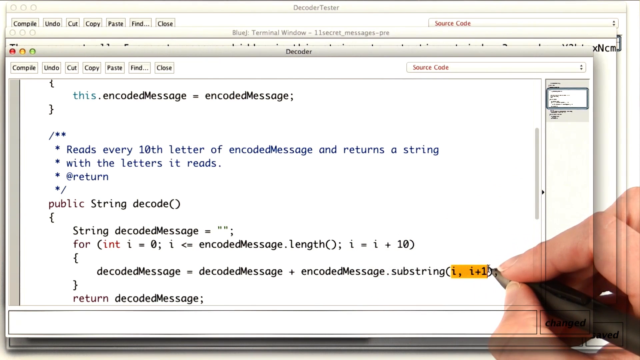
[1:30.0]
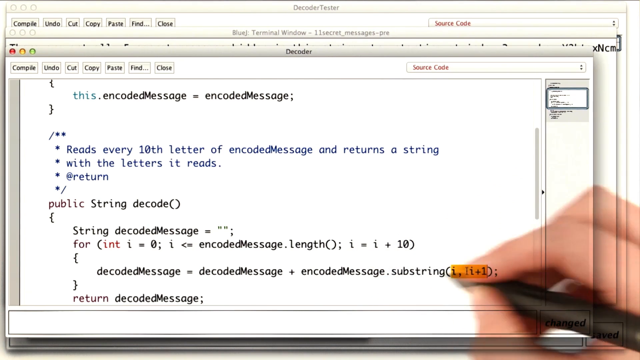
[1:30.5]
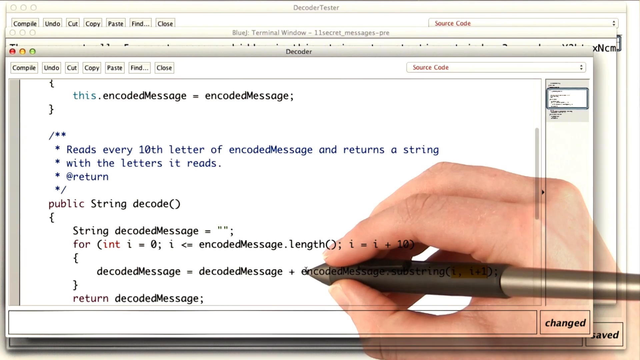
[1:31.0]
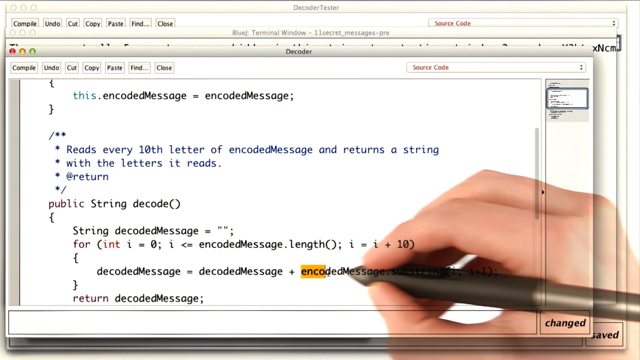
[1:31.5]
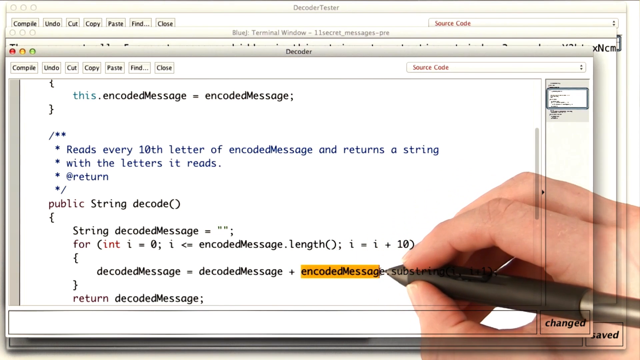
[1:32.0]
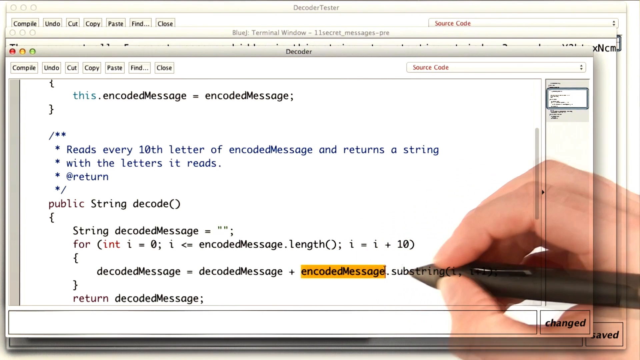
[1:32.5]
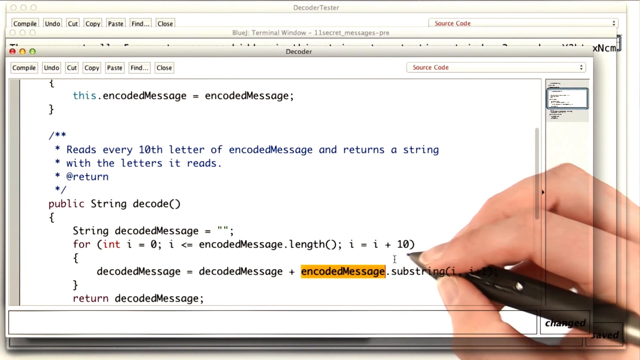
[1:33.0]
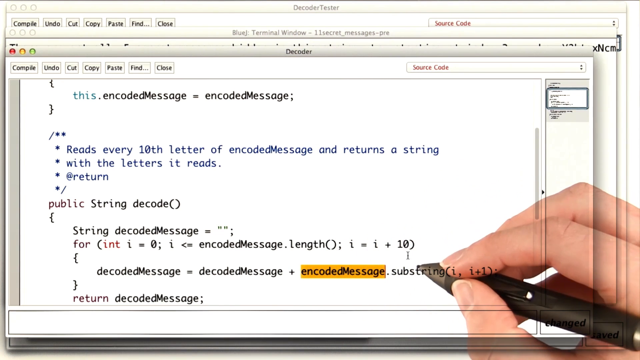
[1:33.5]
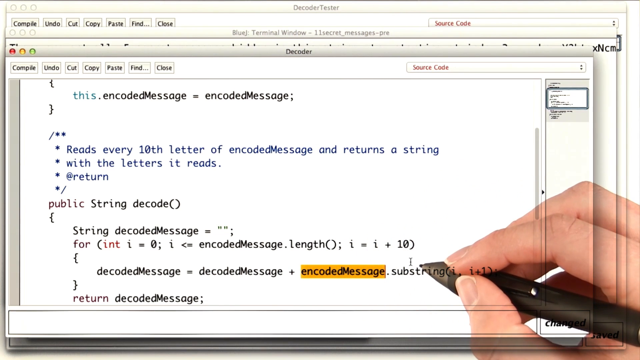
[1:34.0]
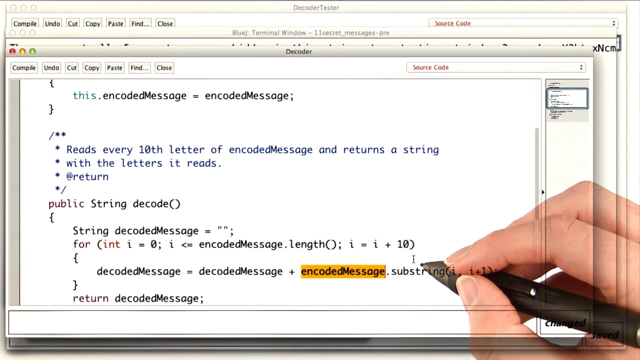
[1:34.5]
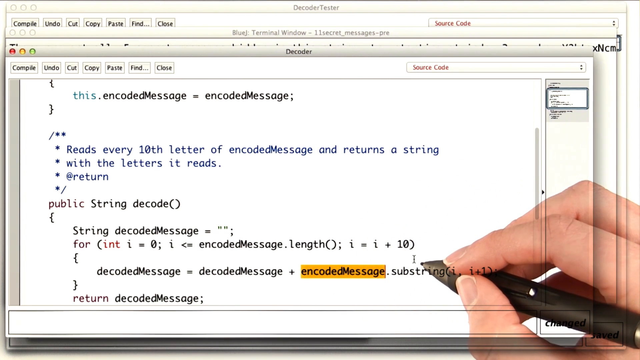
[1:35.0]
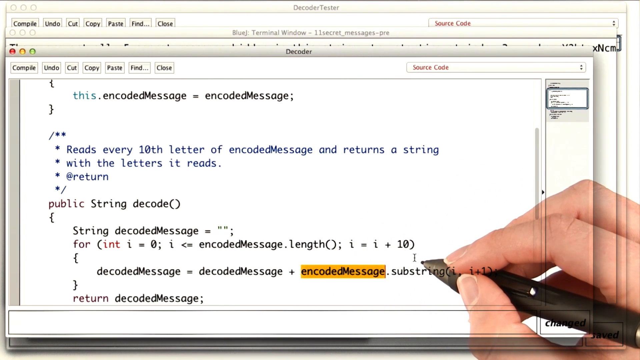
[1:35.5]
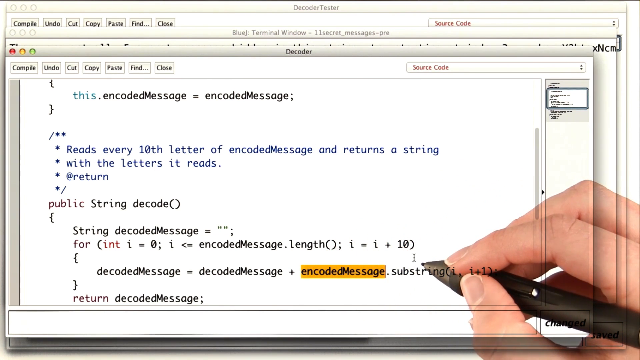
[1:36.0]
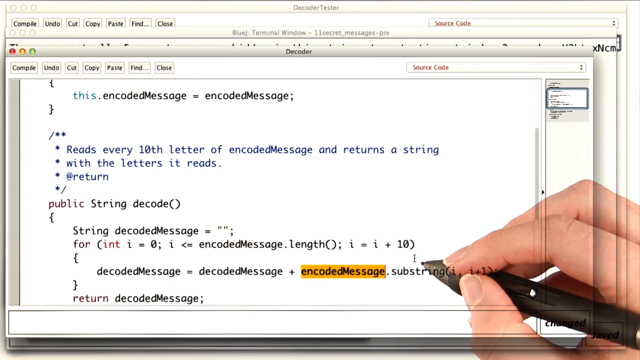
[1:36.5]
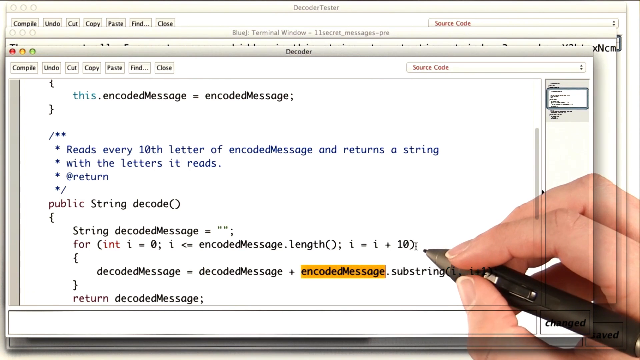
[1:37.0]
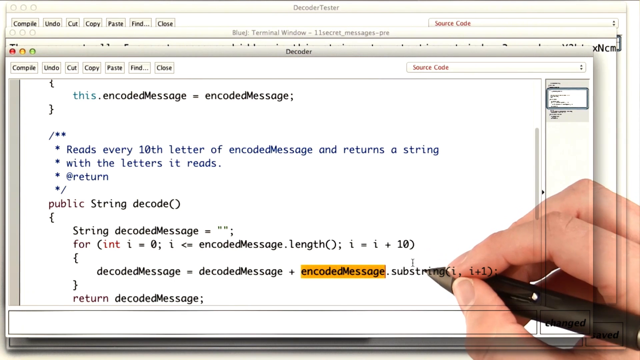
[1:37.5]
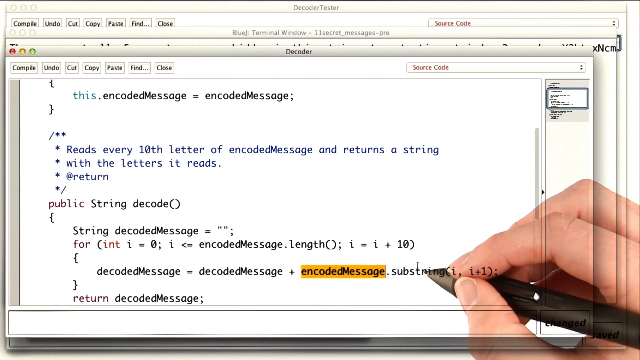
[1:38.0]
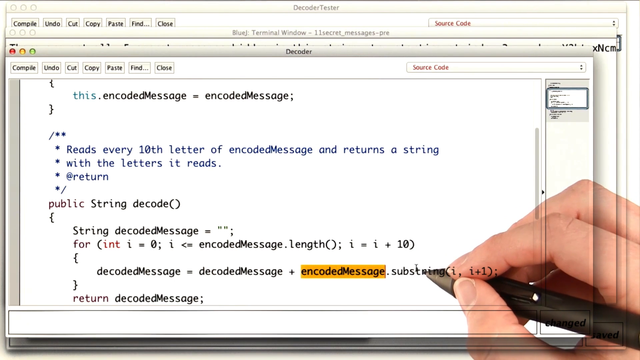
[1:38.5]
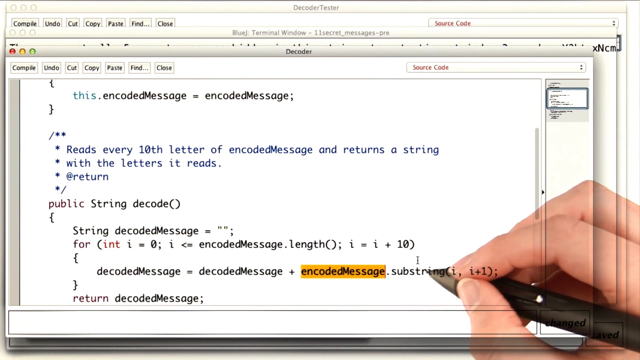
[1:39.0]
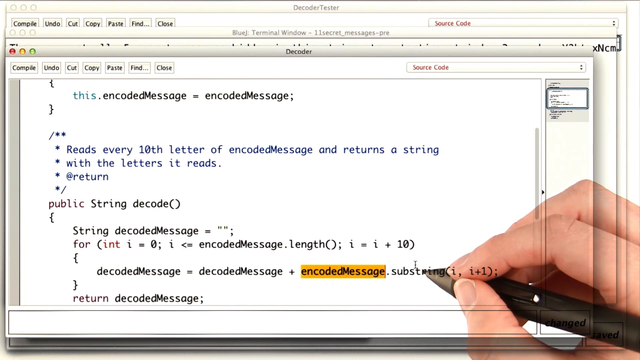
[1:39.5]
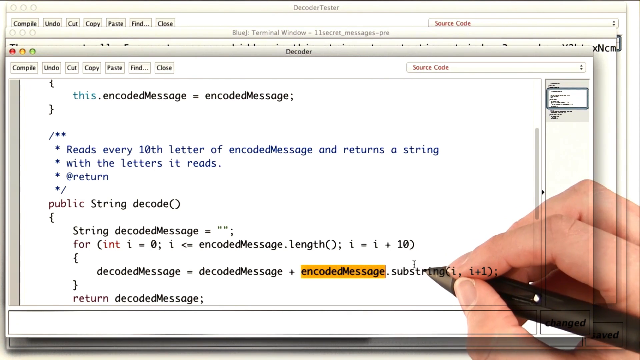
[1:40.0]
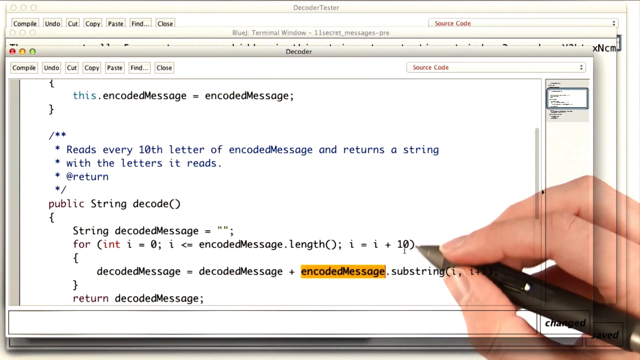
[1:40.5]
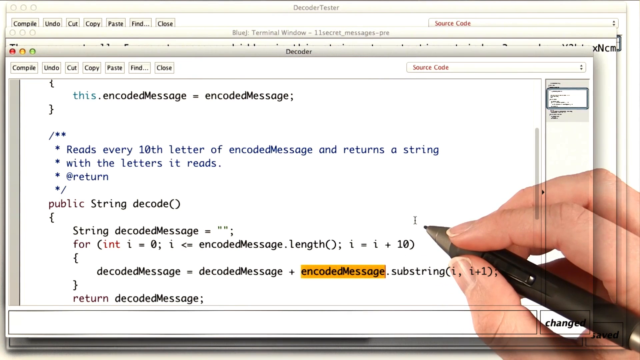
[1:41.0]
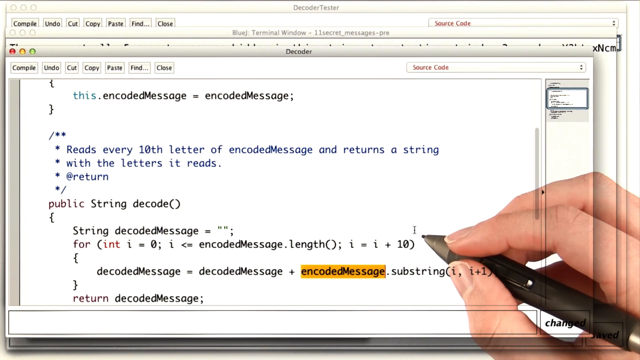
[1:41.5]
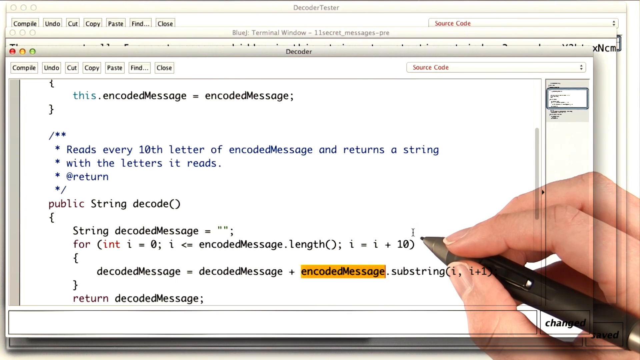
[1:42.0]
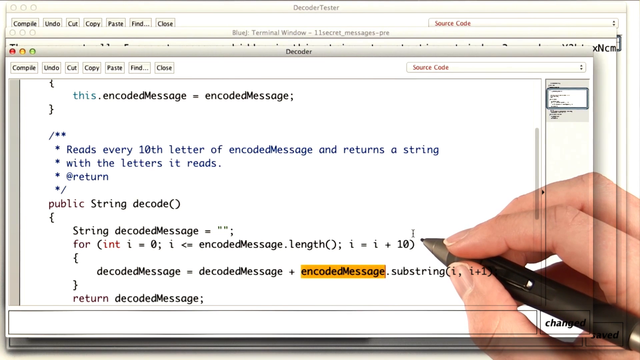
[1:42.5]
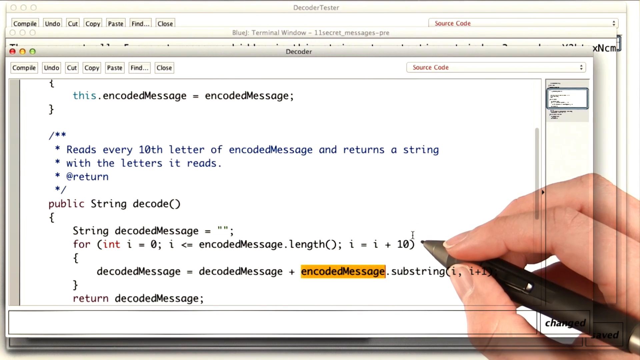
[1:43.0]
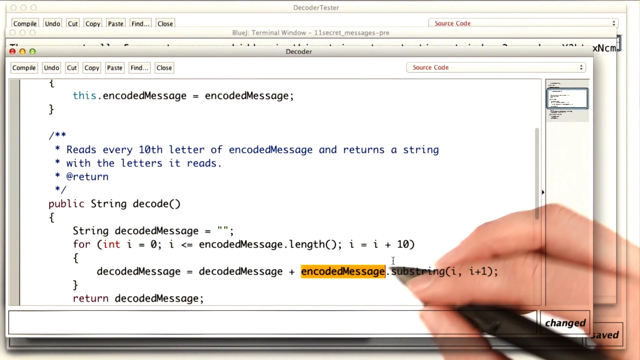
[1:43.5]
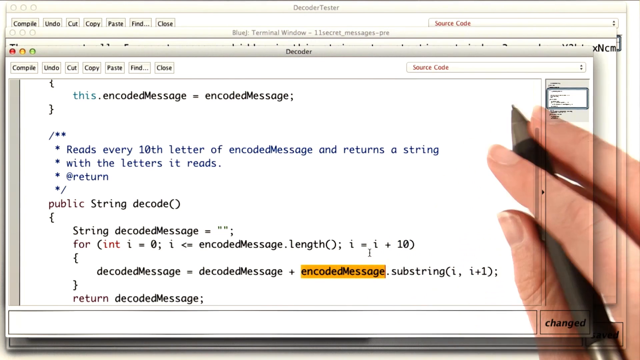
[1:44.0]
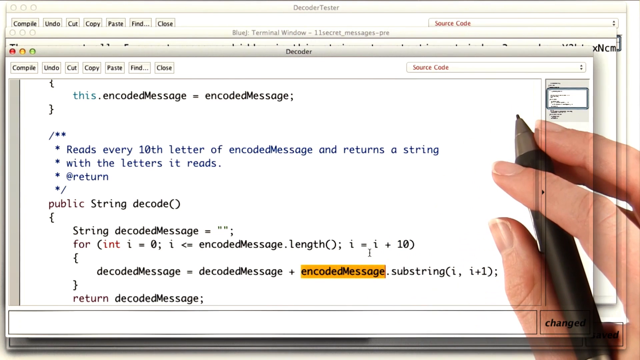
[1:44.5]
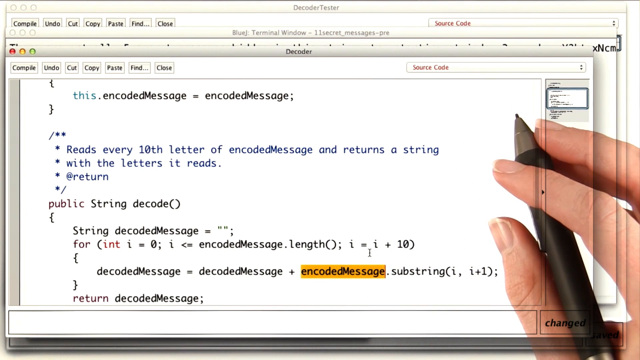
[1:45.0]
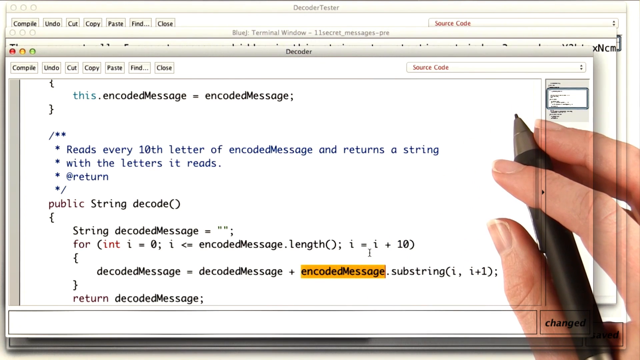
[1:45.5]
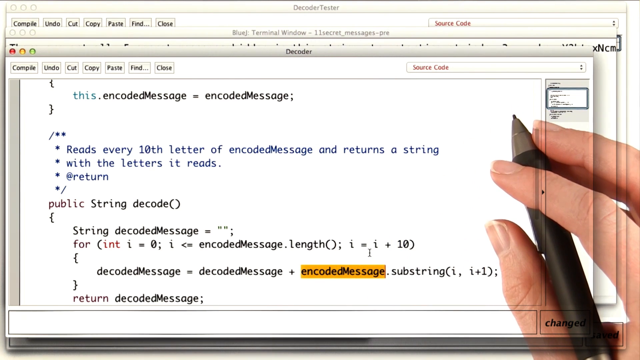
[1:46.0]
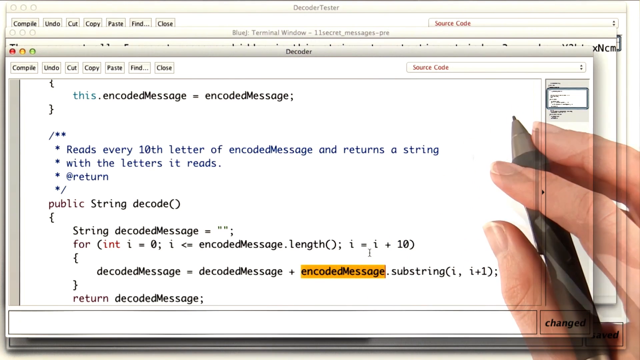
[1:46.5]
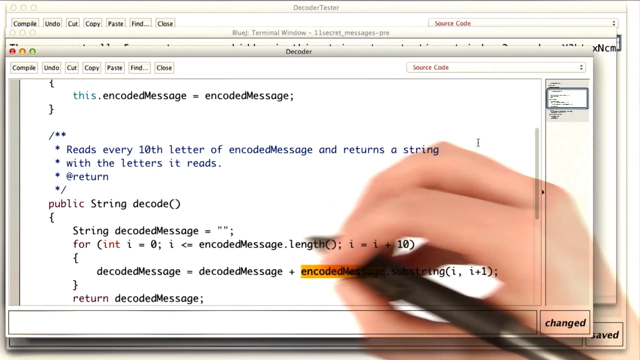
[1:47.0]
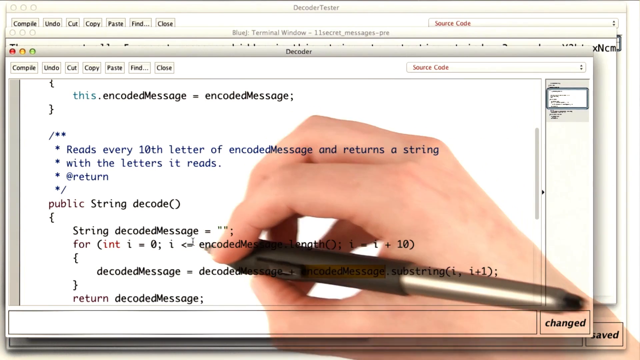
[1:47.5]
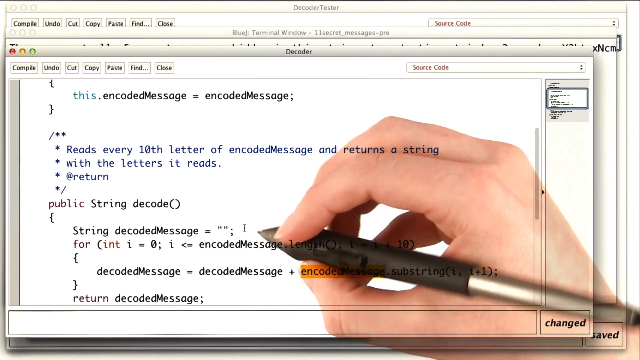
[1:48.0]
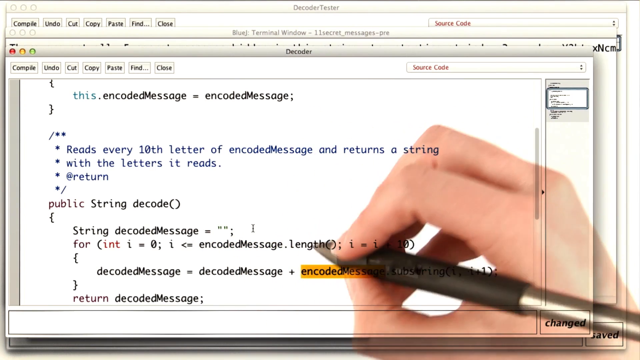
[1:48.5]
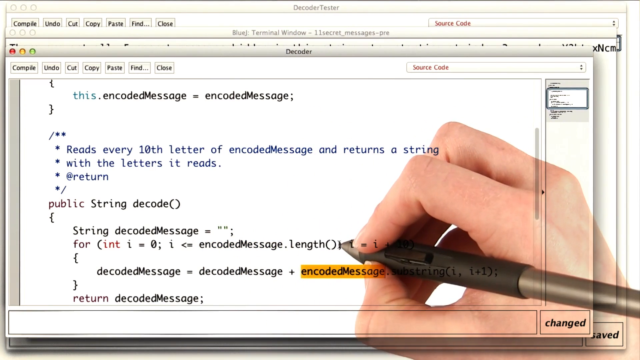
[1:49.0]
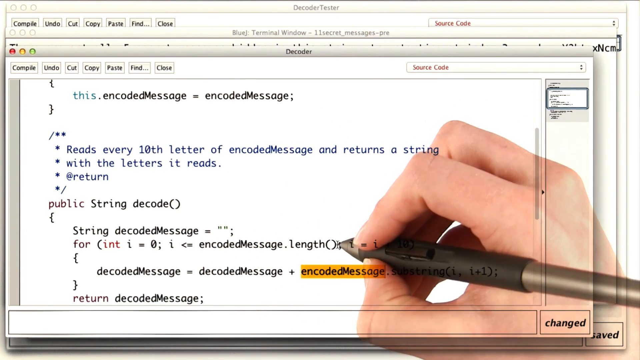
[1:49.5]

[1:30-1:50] The person continues highlighting different pieces of text on the decoder page, including encoded message and substring. They wait a few seconds, looking toward the substring section, then move the pen away from the screen before it moves again toward the encode message length section. At the top left of the page there are a red button, a yellow button and a green button, and below them "compile, undo, copy, paste, find, close". Behind that page is another page that says "terminal window", and behind that is the decoder tester, all open on top of one another. Above the message being worked on, the text says "reads every 10th letter of encoded message".